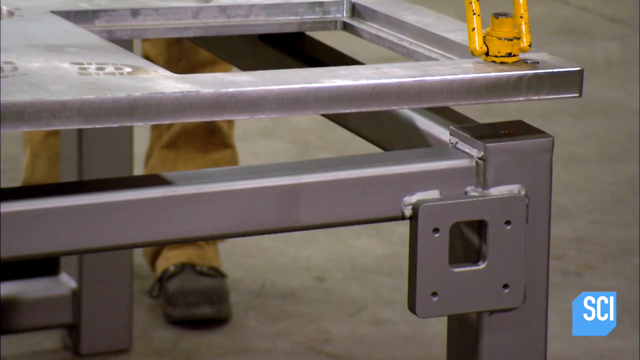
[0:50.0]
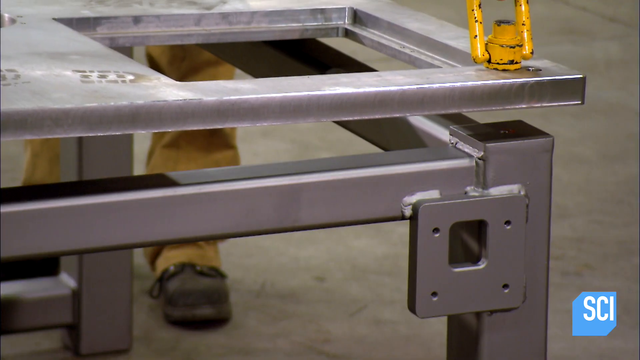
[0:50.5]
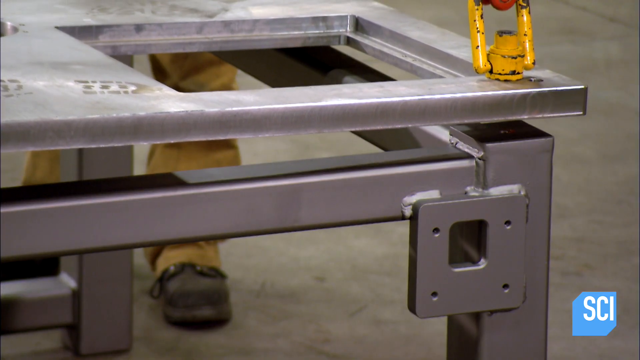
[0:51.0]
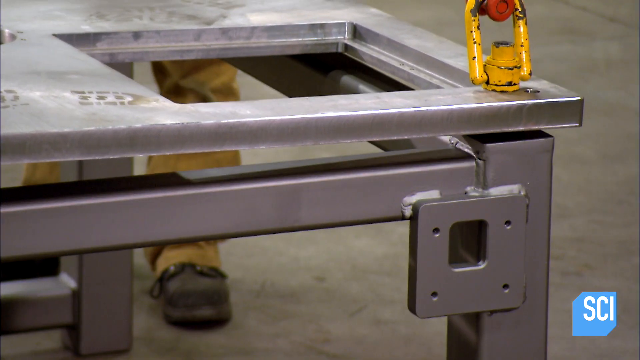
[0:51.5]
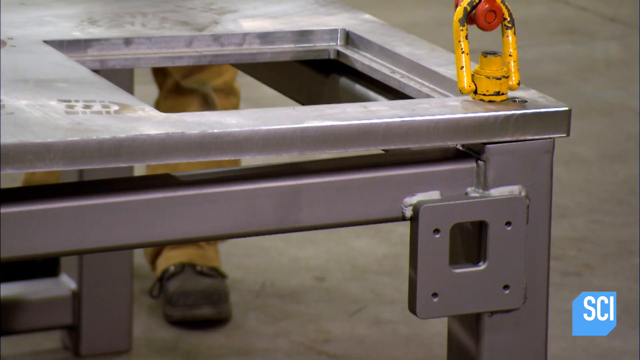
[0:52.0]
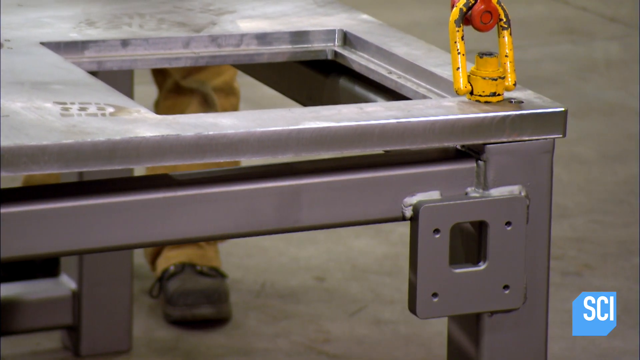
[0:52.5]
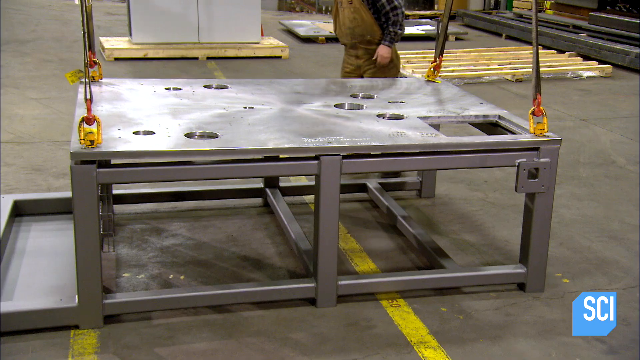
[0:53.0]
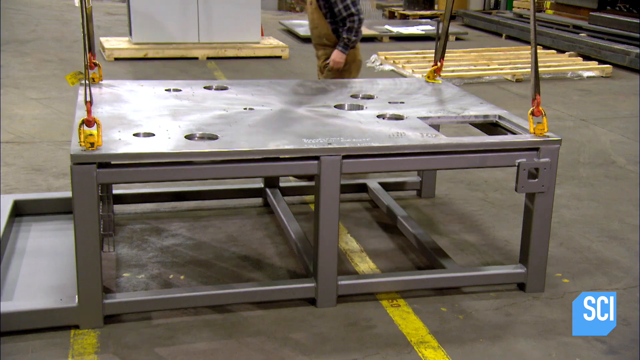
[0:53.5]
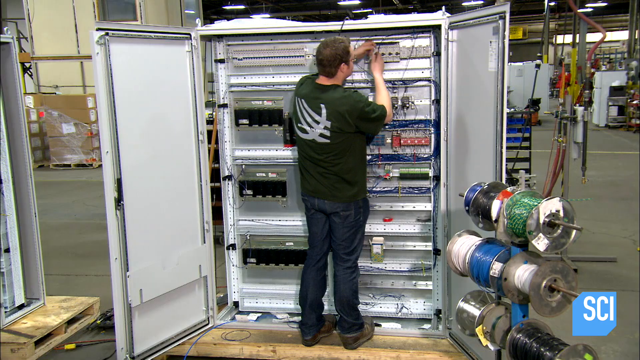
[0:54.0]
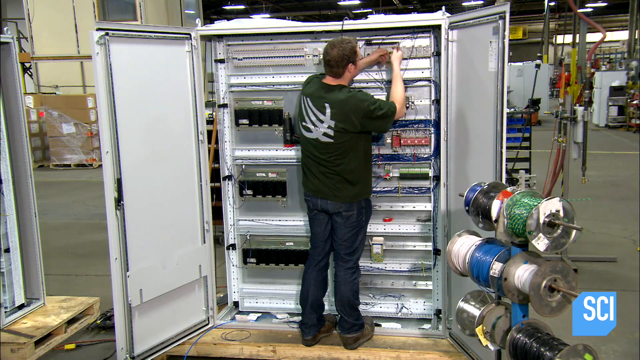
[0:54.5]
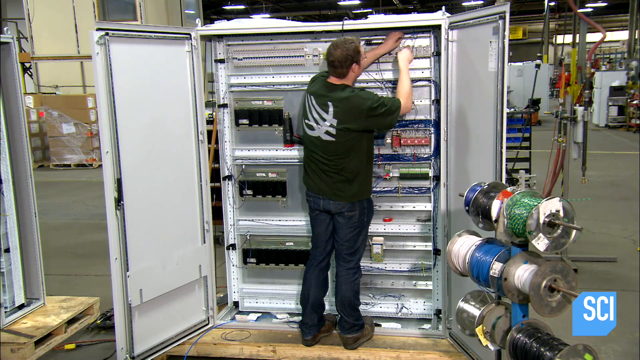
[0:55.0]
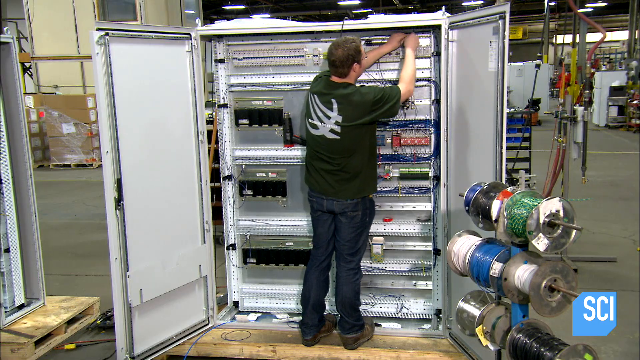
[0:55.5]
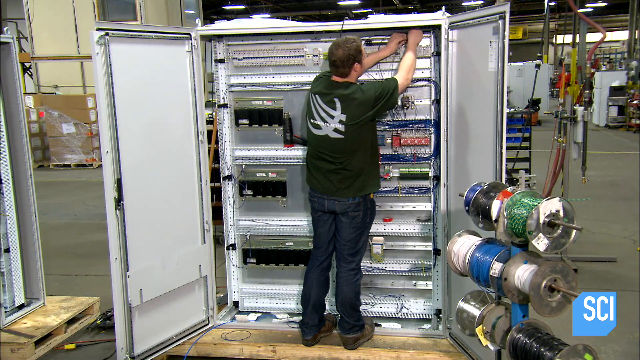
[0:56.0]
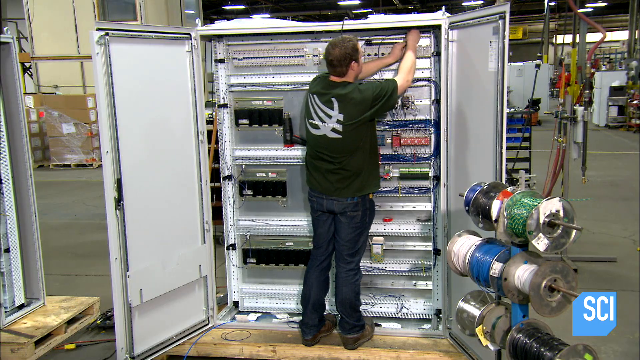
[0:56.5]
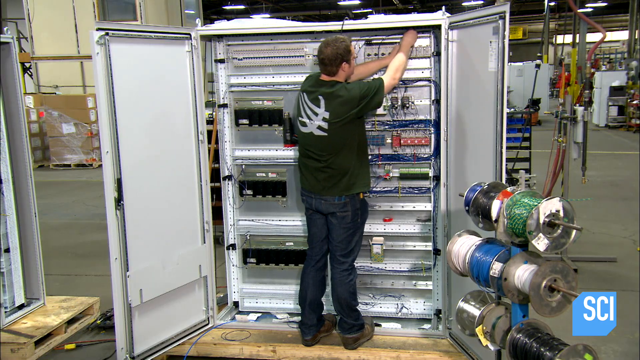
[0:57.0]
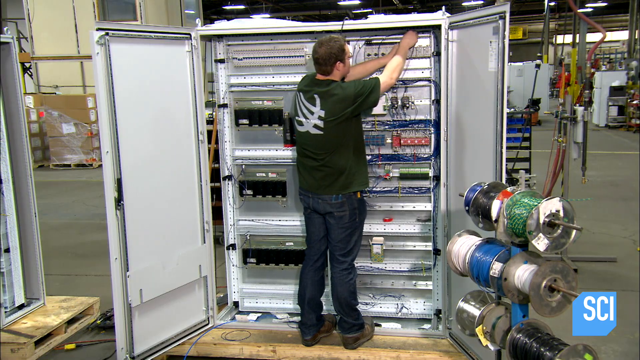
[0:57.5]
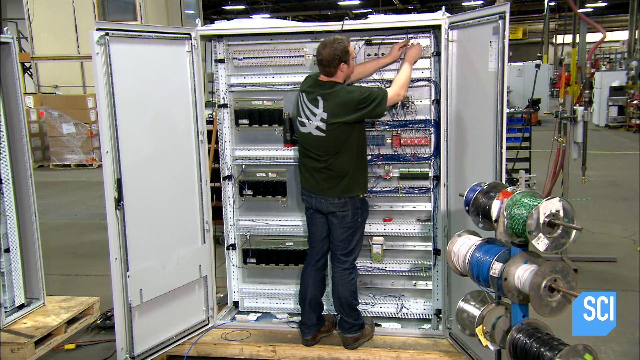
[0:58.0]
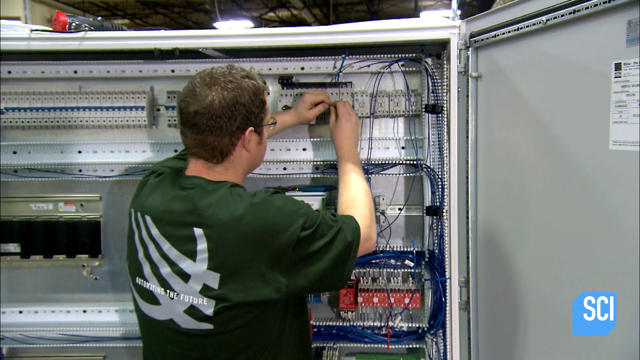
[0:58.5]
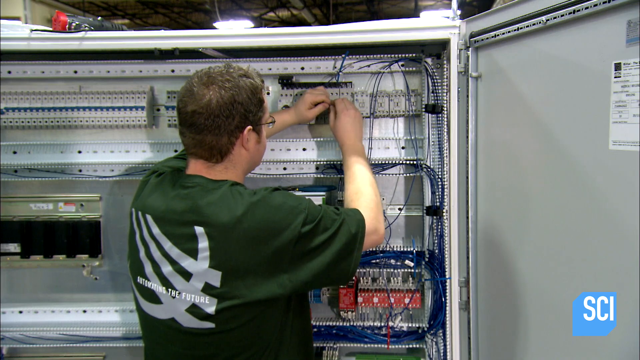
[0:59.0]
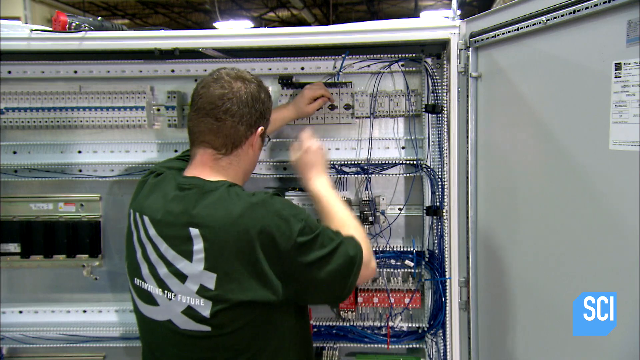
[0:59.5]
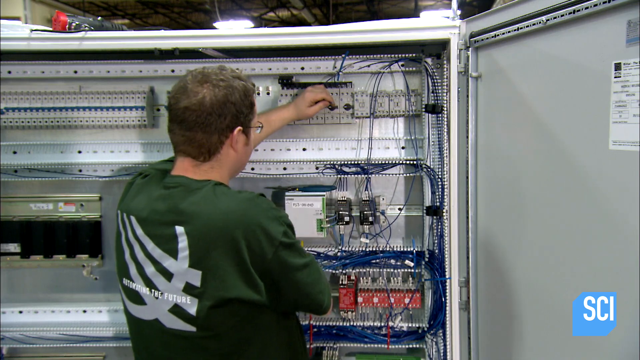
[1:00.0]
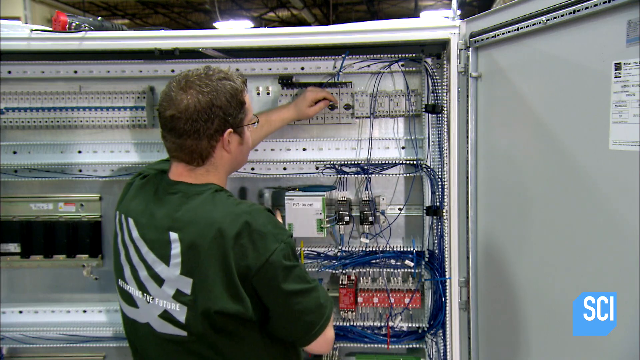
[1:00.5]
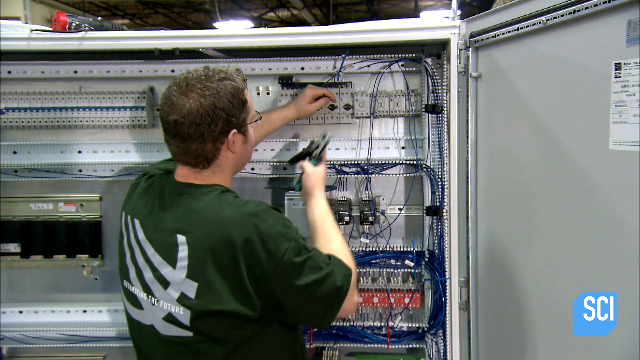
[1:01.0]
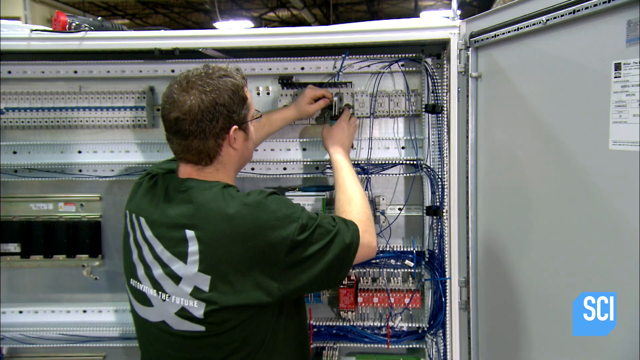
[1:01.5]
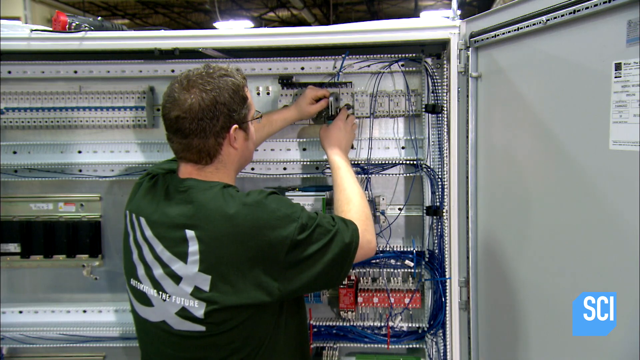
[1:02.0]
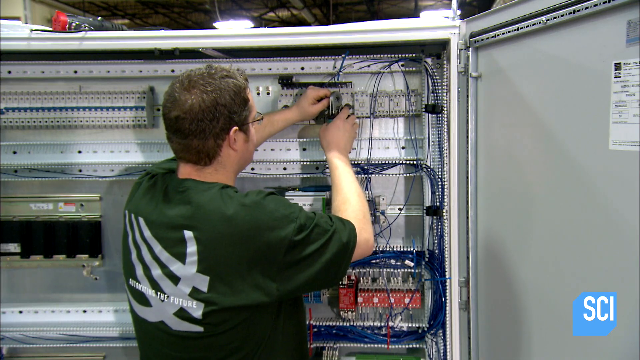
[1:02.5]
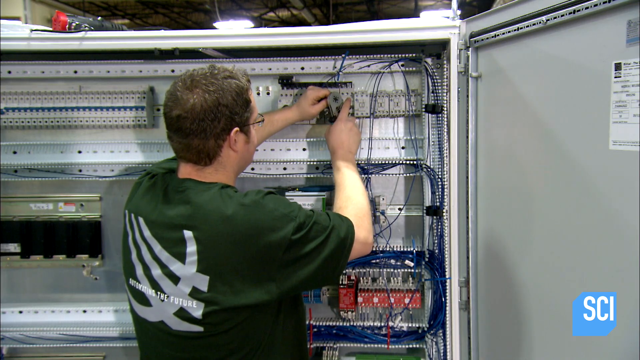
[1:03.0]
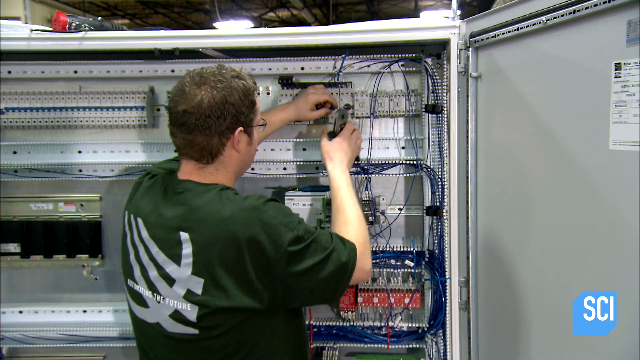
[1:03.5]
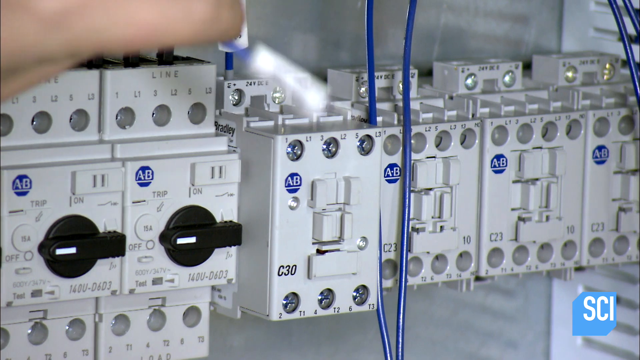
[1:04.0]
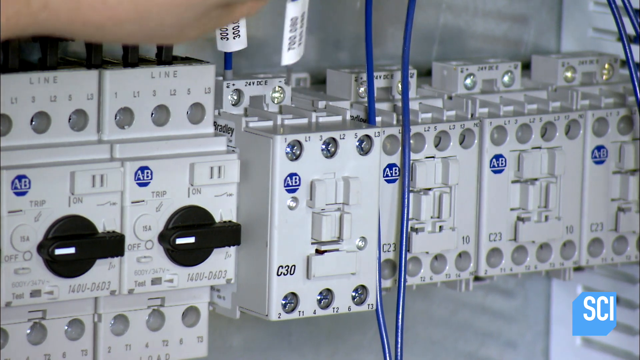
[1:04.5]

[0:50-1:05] The flat piece of metal is lowered down onto the top of the metal frame by machines and hoist belts and sets down on it. The view then shifts to another man standing inside something with two large doors that open to the left and right. Inside the doors are many electrical units, such as little plastic boxes and other electrical components. The man's back is to the camera, and he appears to be working on the wiring. The wires are blue. Some of the boxes have blue round things on them and some have black round things on them, and there looks to be a red box. There appear to be coils of wire outside the box behind the man.